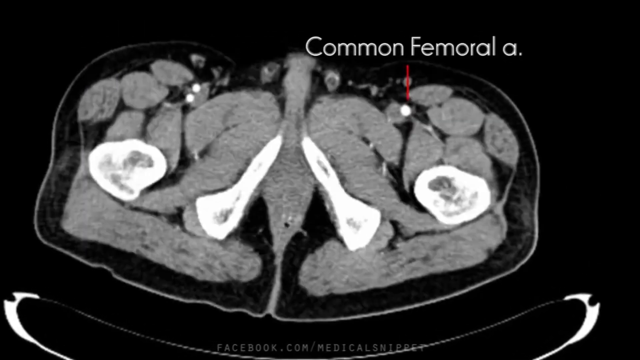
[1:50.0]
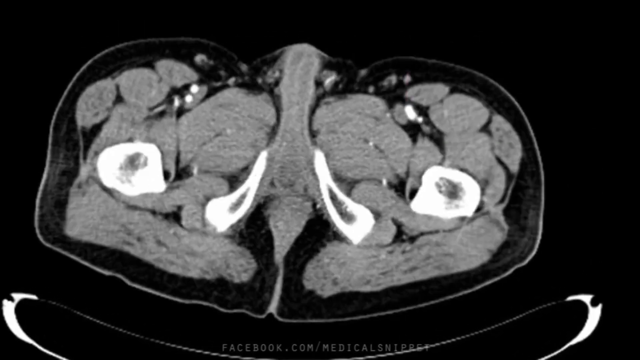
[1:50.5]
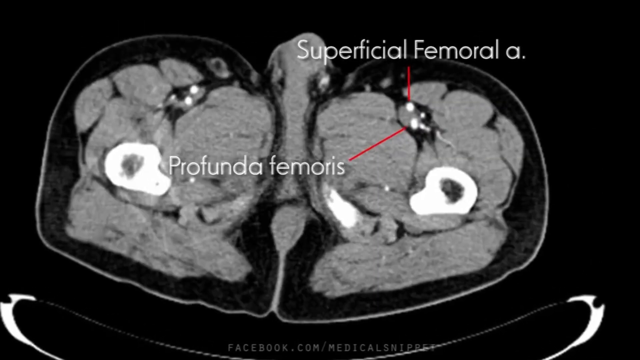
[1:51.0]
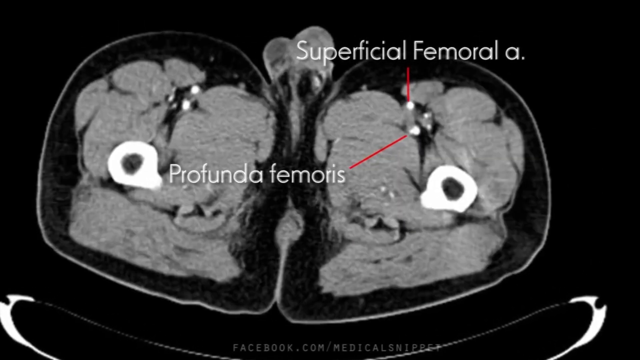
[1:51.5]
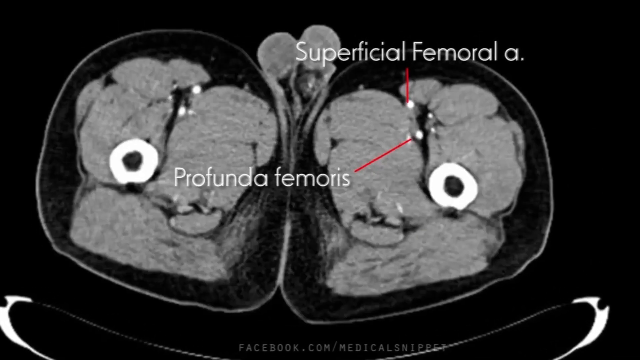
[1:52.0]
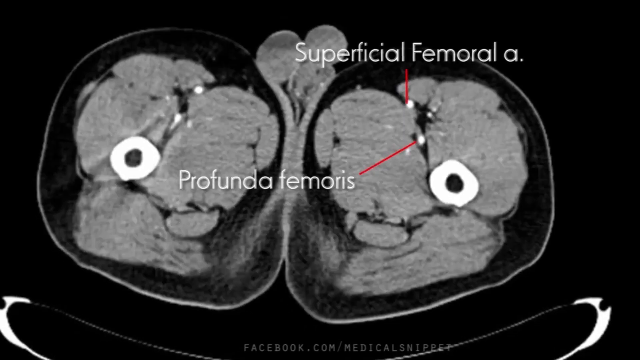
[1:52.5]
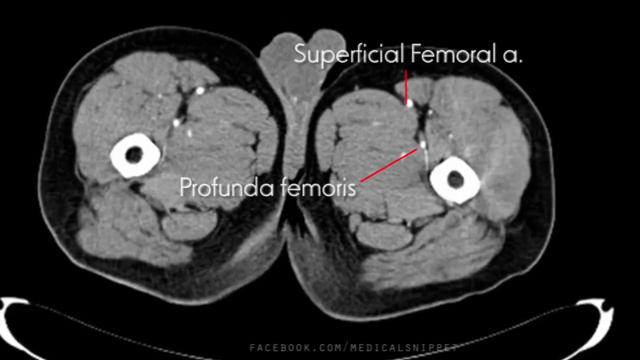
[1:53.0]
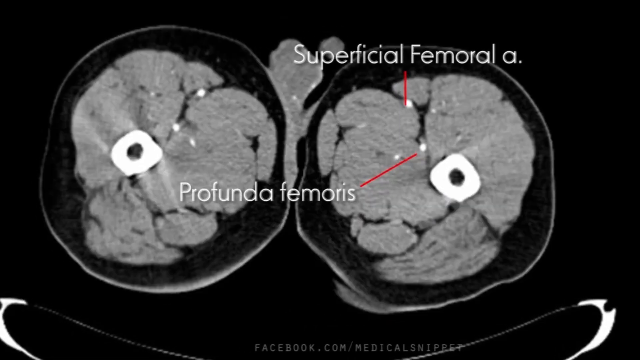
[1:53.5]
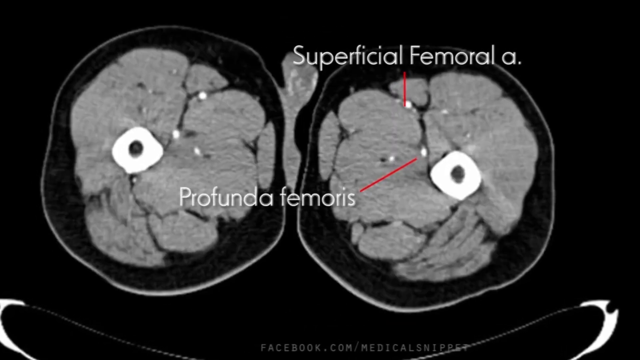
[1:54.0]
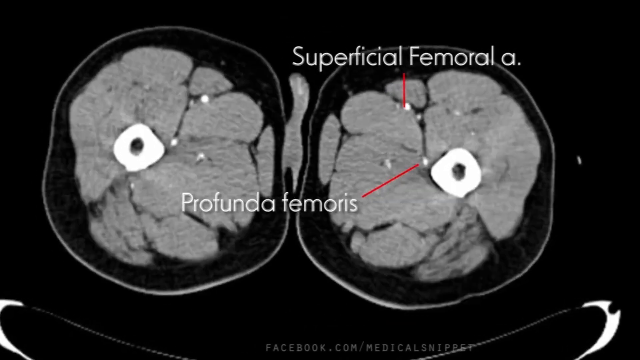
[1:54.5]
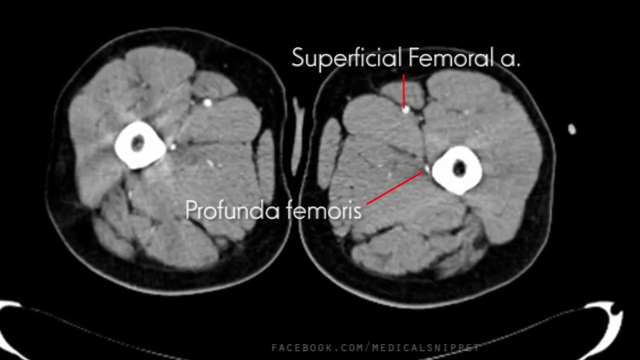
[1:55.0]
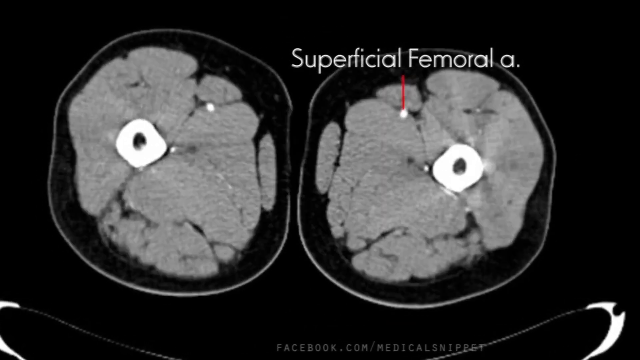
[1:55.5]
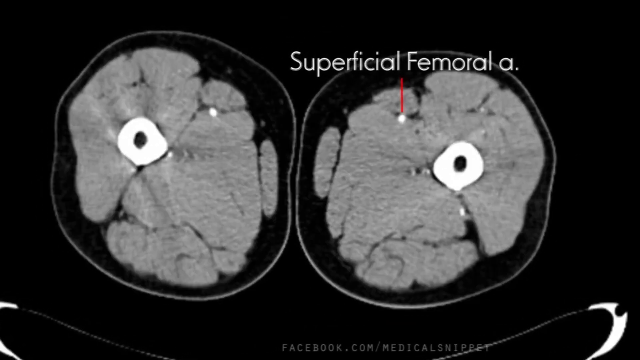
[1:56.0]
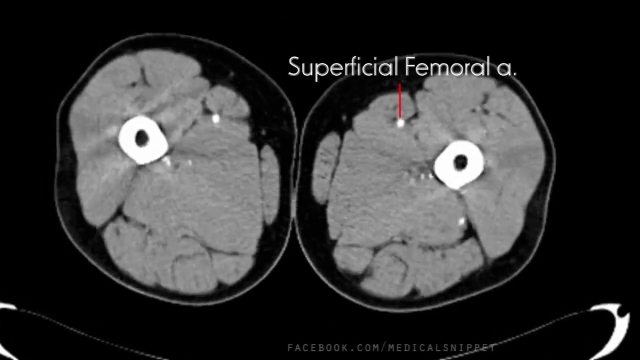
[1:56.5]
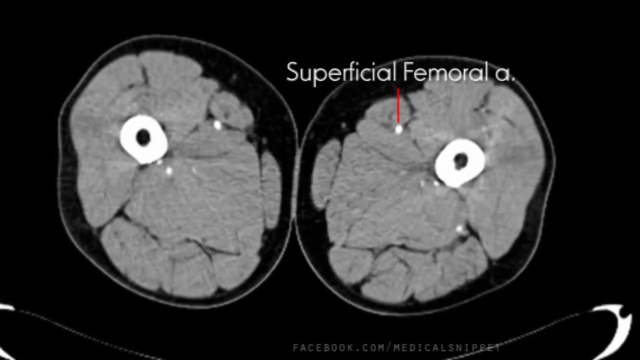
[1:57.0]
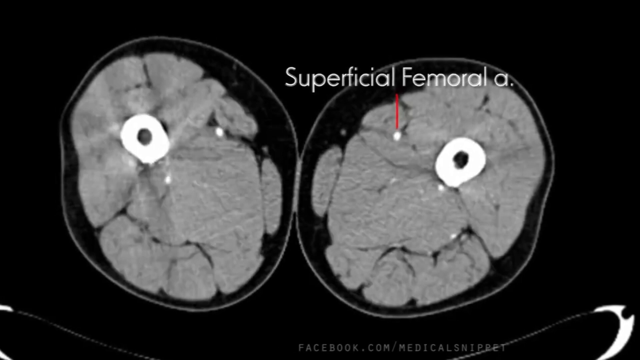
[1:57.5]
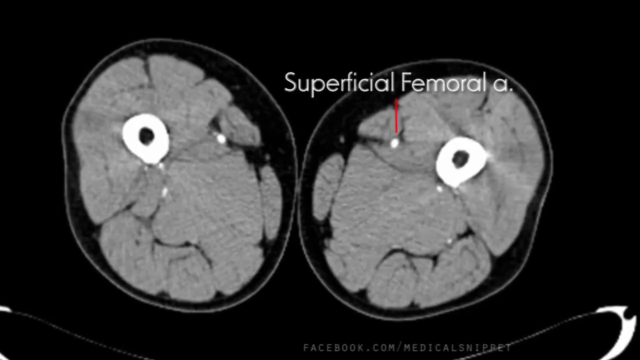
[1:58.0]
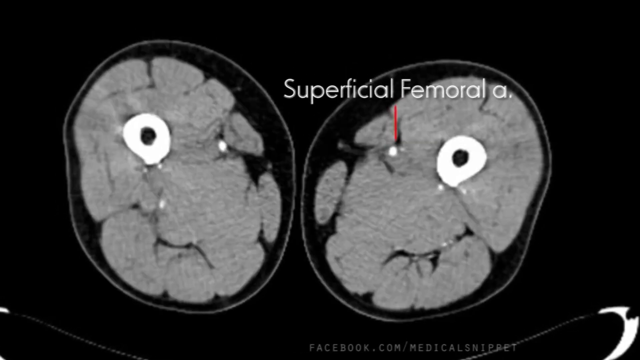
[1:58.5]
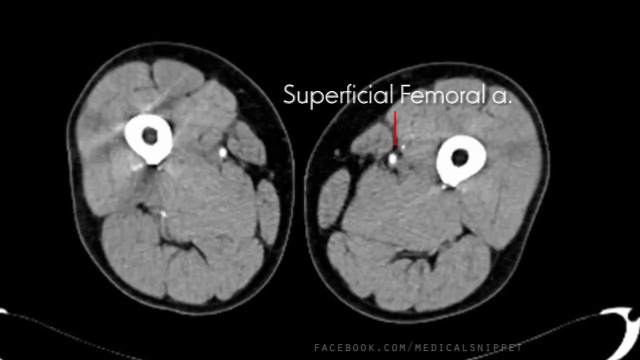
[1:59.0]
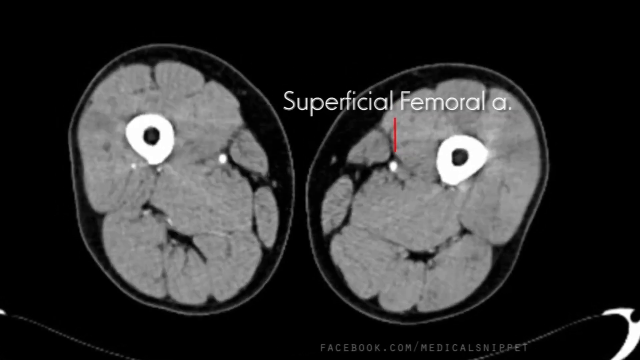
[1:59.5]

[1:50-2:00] In the center of a black screen is a black and white image of what appears to be an MRI of some part of the human anatomy. The first words shown on the screen say "common femoral A", with a small red line pointing to a white spot on the medical imaging. The imaging transforms and takes different shapes as it moves. After several more seconds, new words appear: "superficial femoral A", and then another line says "profunda femoris", both with lines pointing to particular spots on the image. The image is almost symmetrical, with the left and right parts looking almost identical.